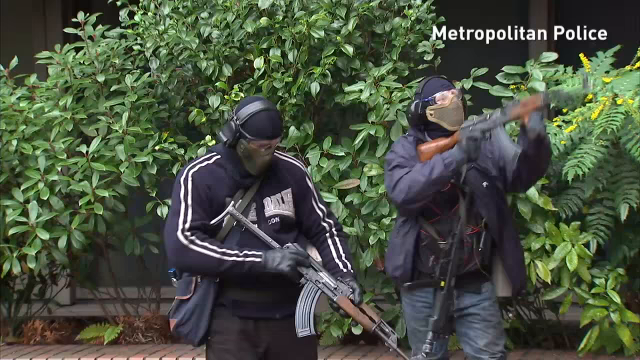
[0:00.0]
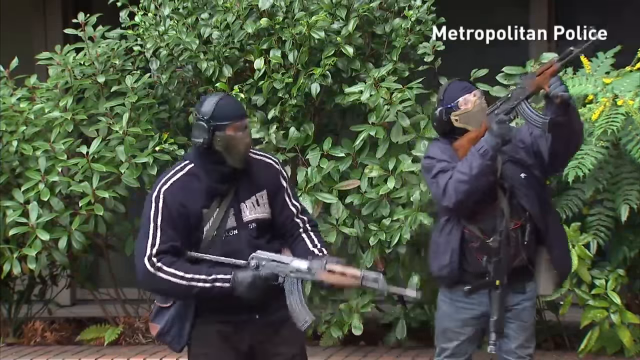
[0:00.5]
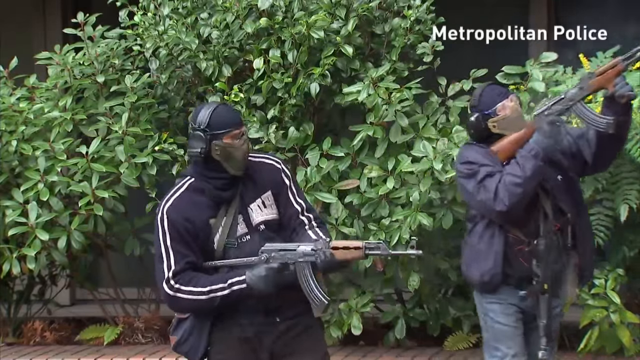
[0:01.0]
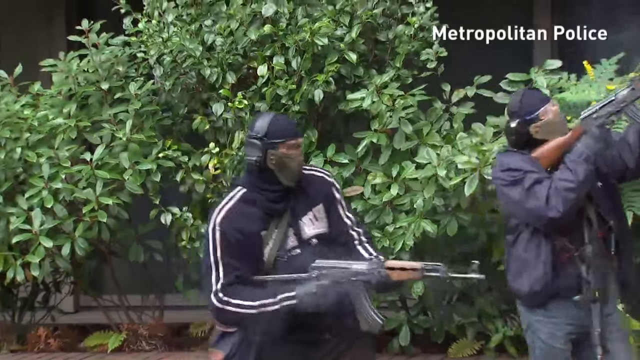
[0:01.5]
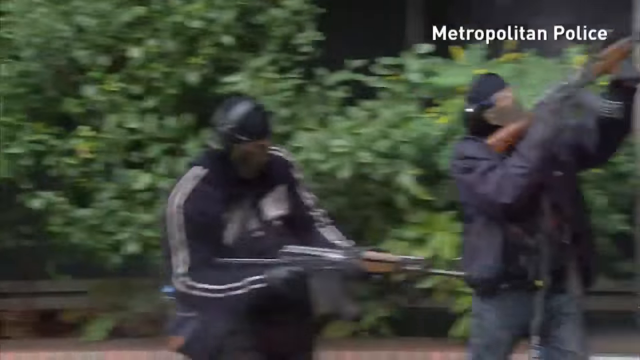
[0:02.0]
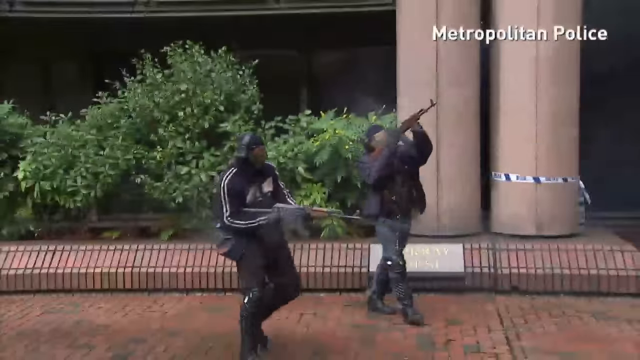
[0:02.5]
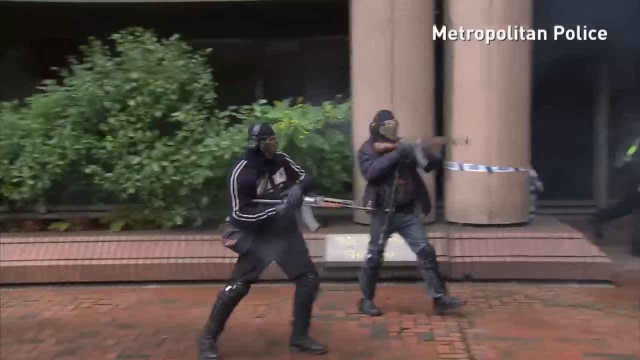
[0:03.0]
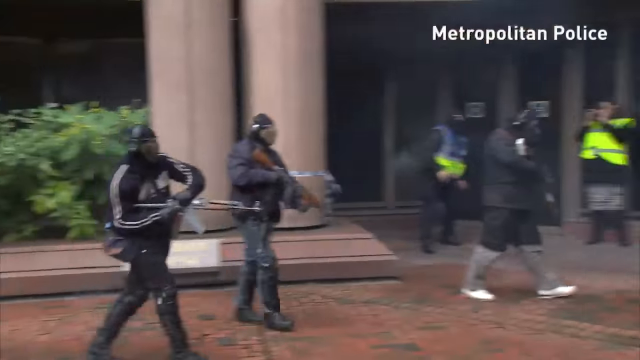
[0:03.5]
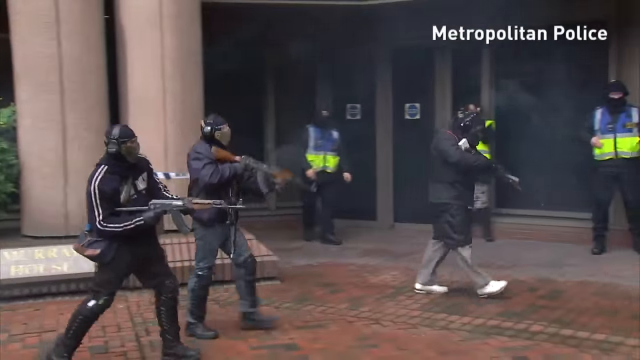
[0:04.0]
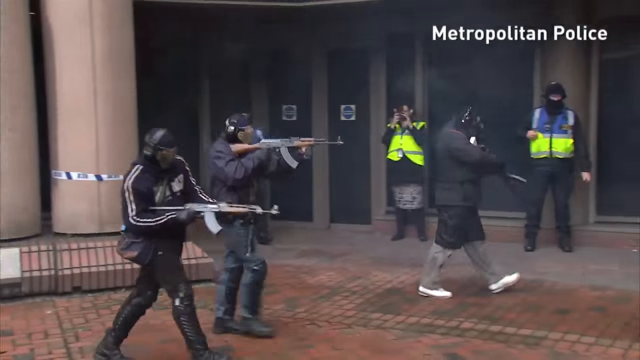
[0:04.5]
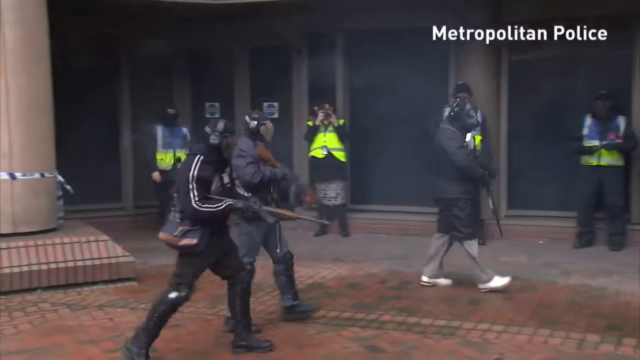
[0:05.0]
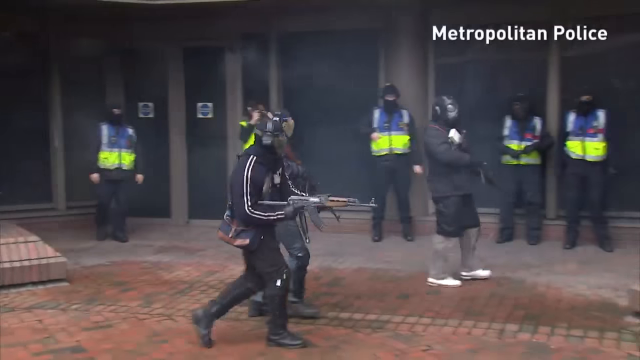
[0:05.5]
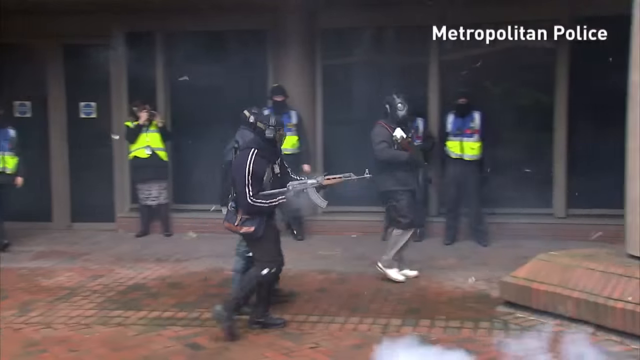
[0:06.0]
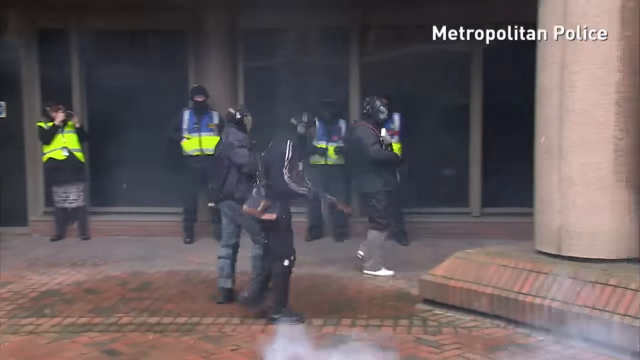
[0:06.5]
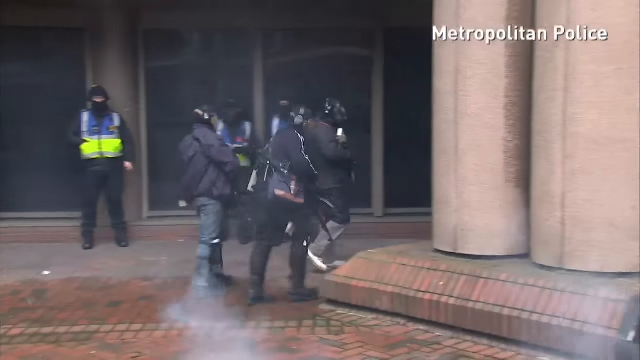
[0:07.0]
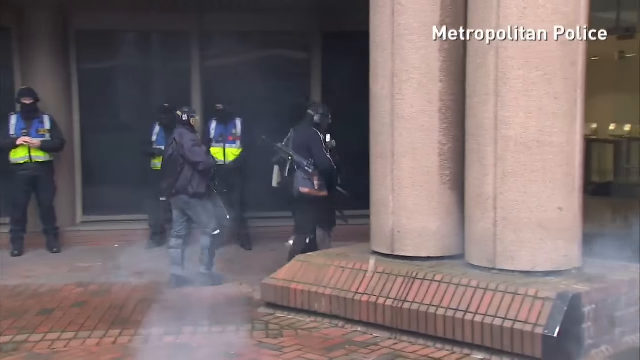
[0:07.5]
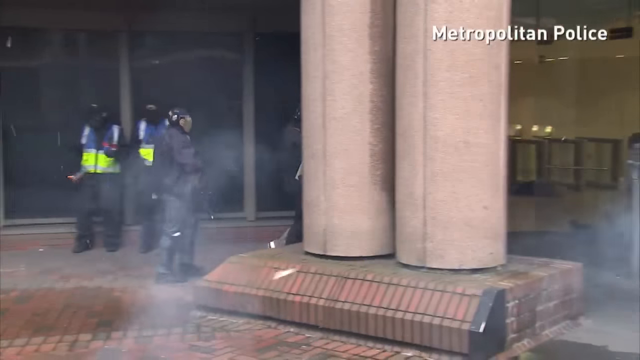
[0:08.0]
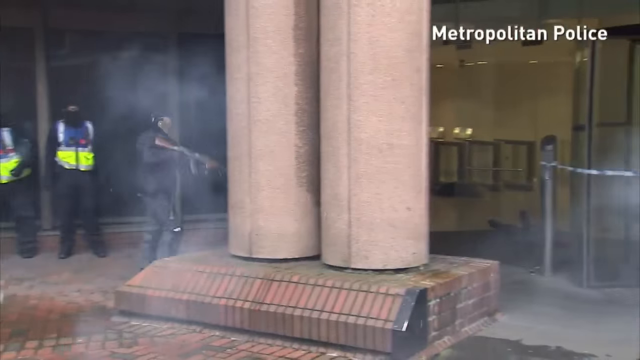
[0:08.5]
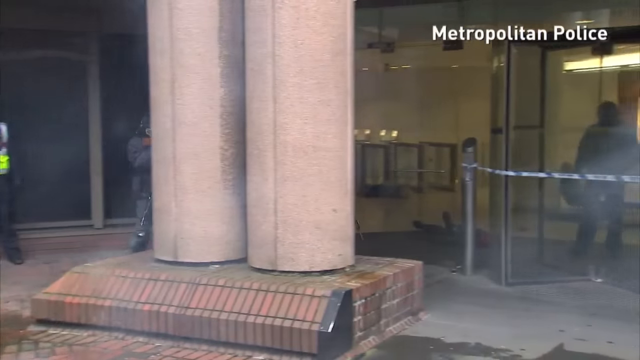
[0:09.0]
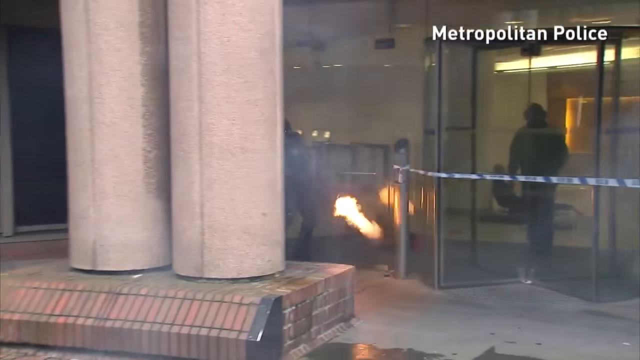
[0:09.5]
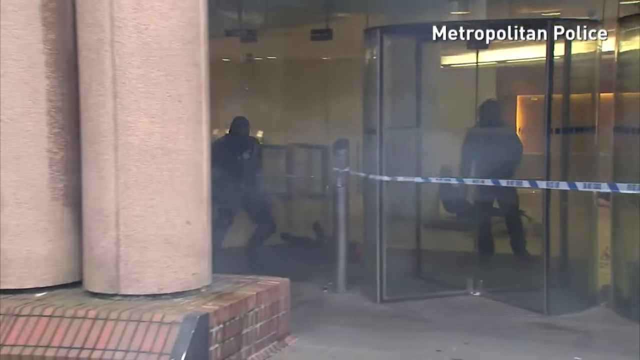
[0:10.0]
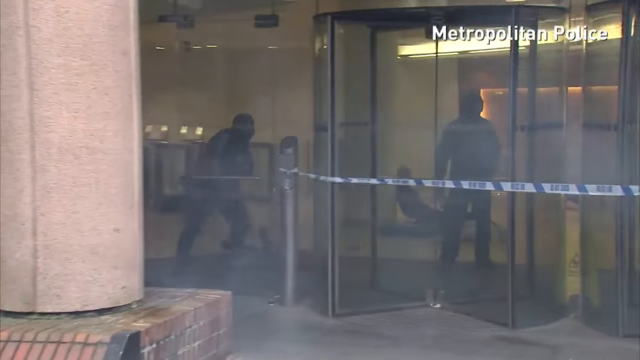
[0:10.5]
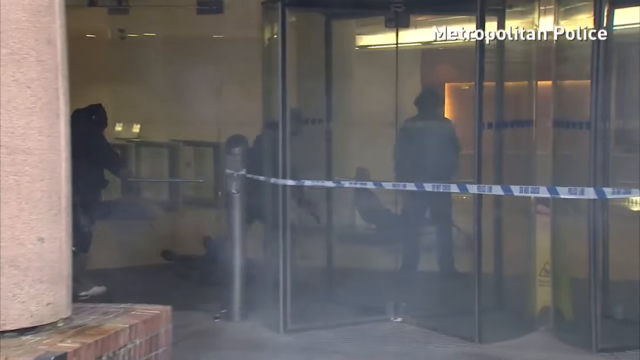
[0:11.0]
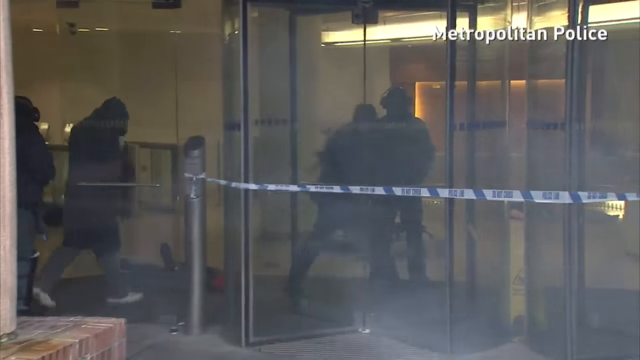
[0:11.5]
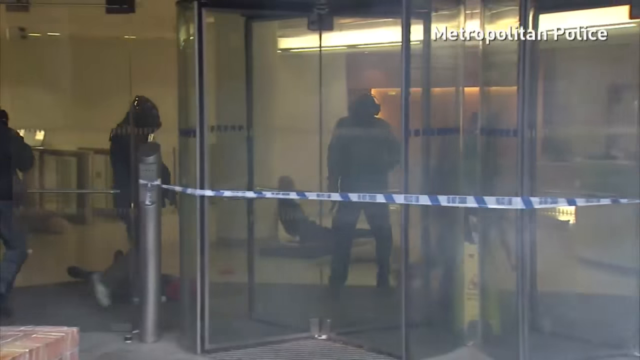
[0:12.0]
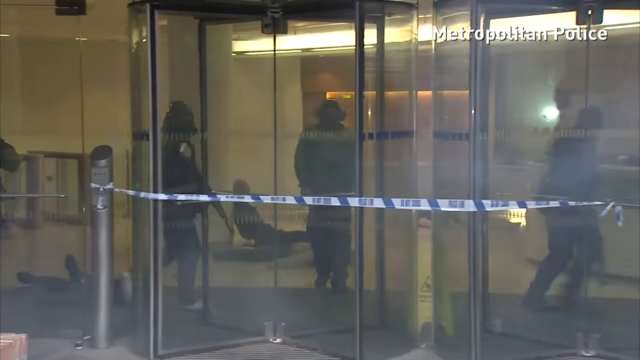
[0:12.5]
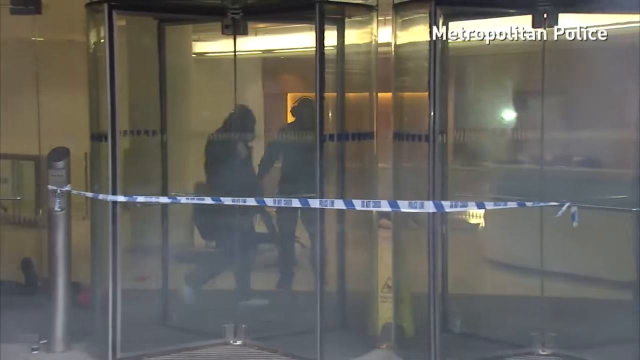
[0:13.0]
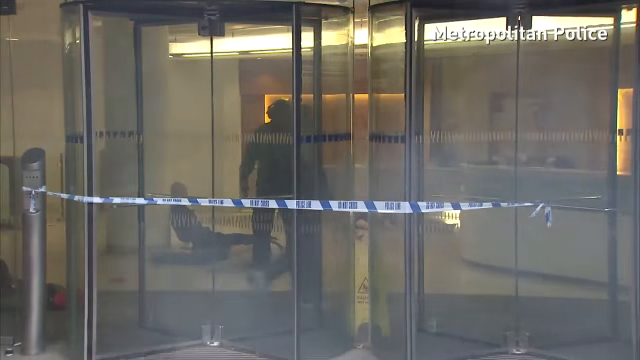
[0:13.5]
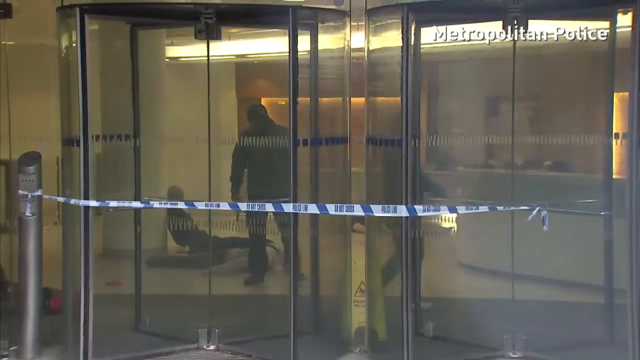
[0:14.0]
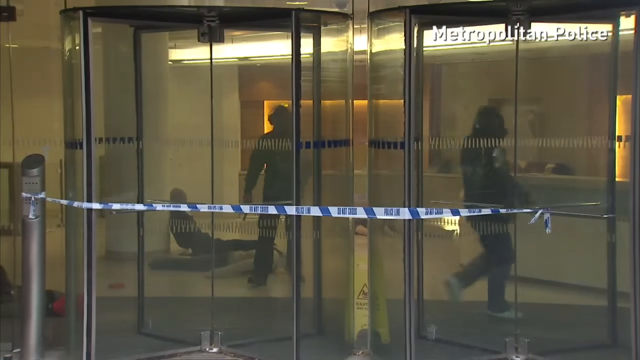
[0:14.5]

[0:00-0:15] In front of a building that appears to be located downtown, three men are shooting rifles and then enter the building. About five security guards are standing in front of the building and do not stop them, so the shooters are possibly also security guards or police officers rather than civilians.